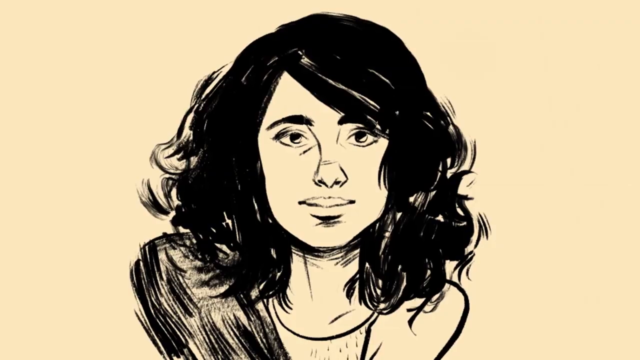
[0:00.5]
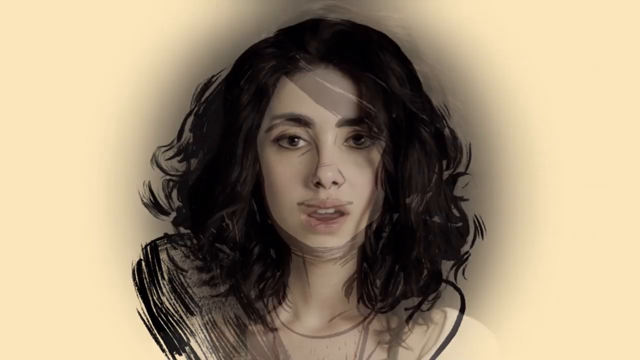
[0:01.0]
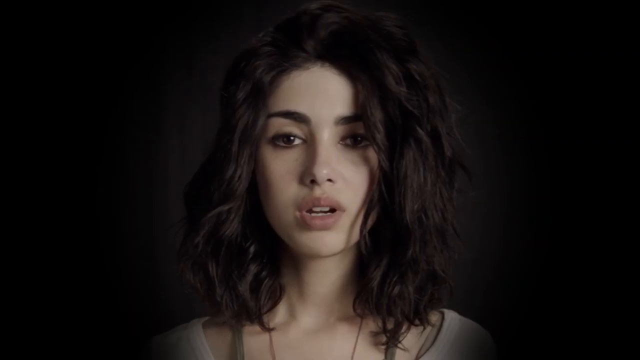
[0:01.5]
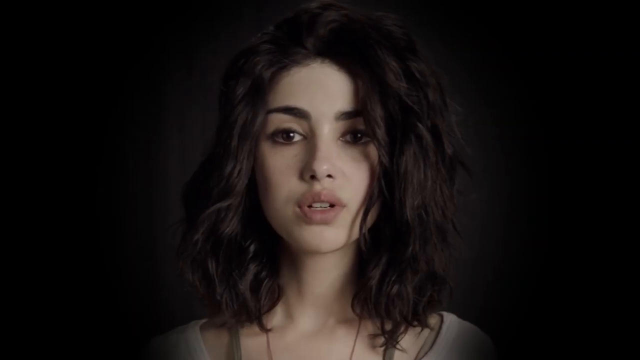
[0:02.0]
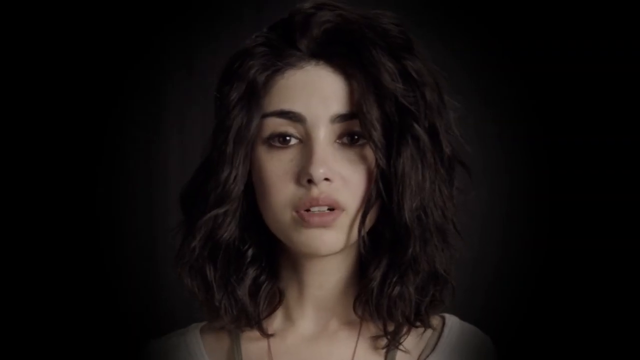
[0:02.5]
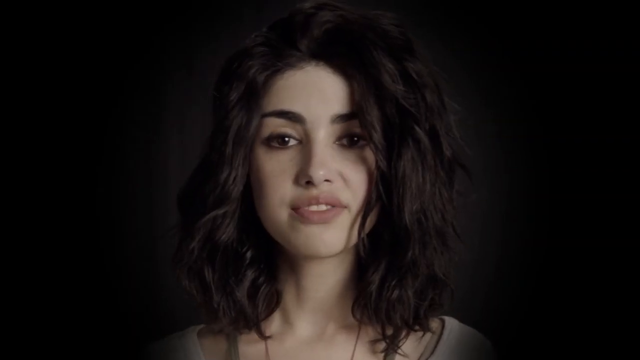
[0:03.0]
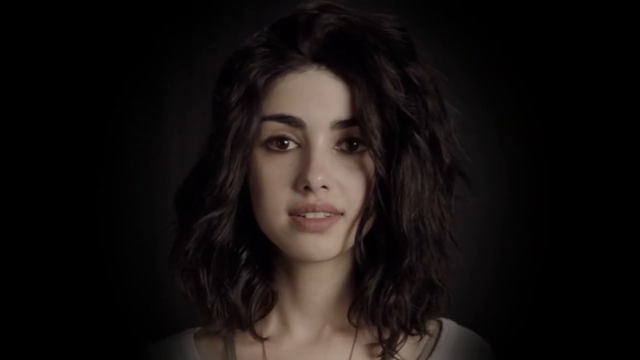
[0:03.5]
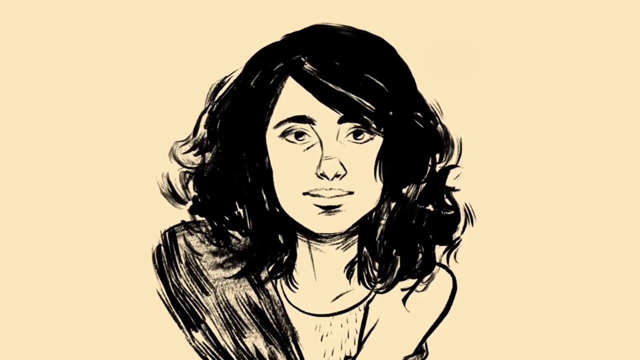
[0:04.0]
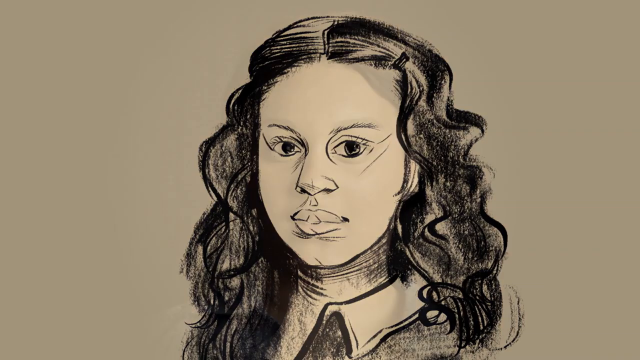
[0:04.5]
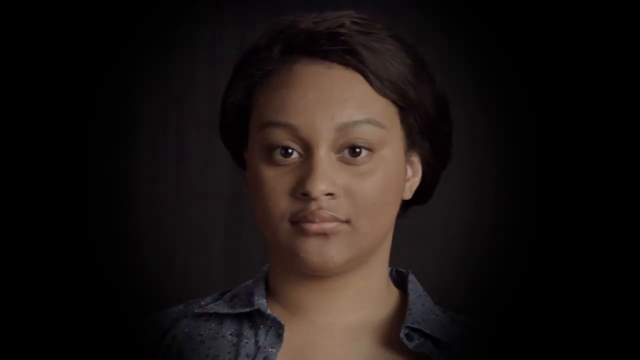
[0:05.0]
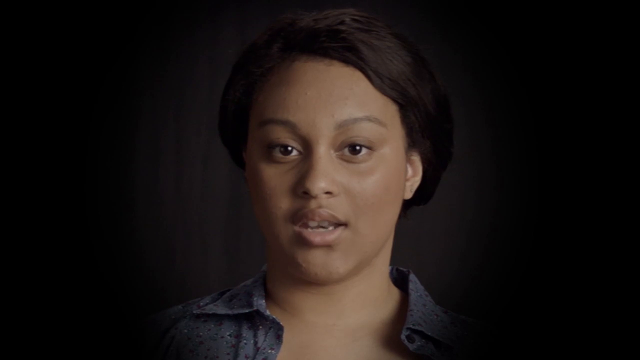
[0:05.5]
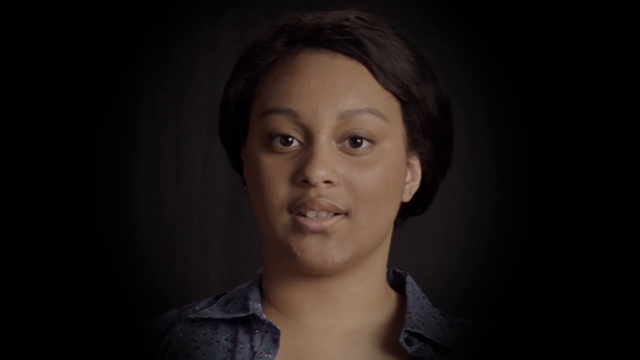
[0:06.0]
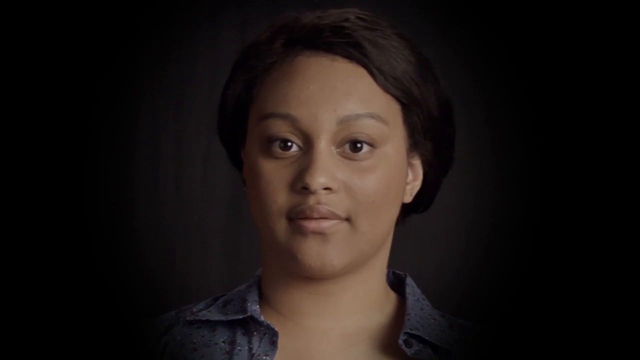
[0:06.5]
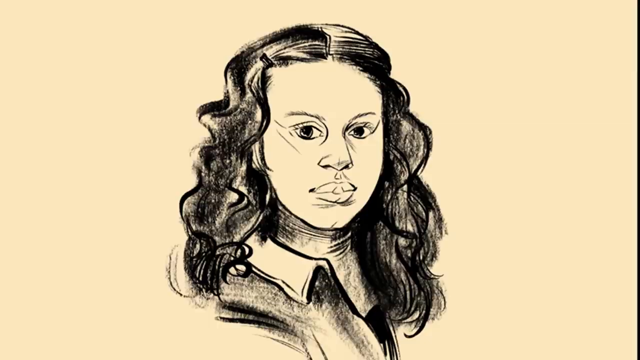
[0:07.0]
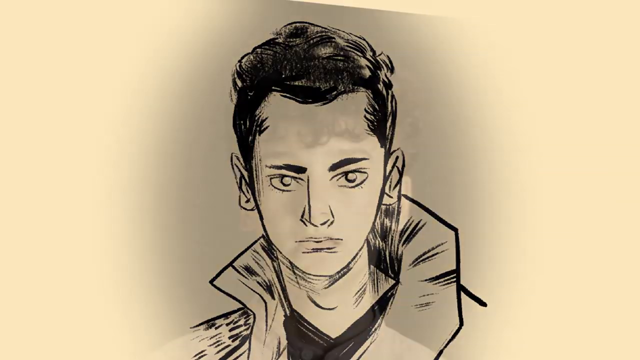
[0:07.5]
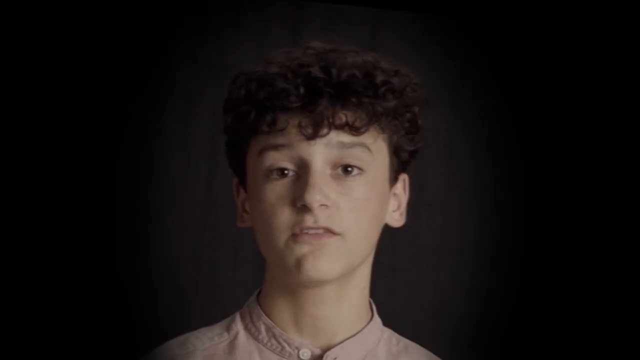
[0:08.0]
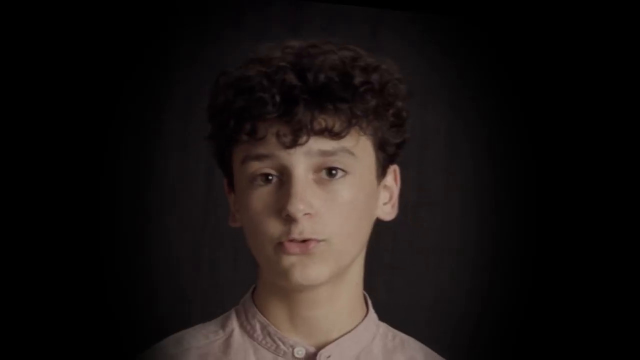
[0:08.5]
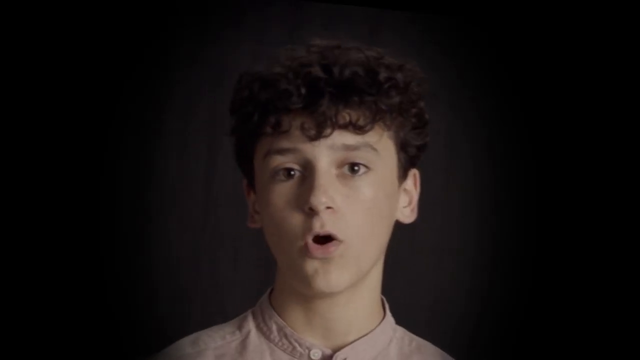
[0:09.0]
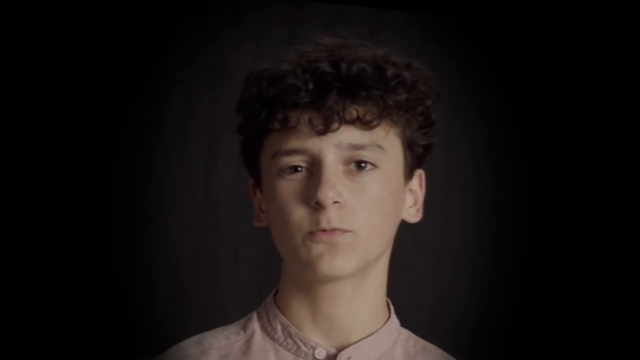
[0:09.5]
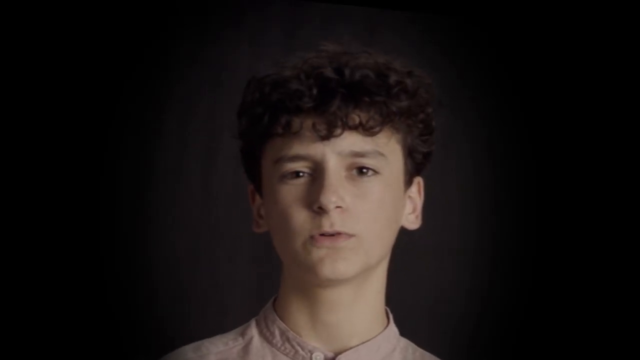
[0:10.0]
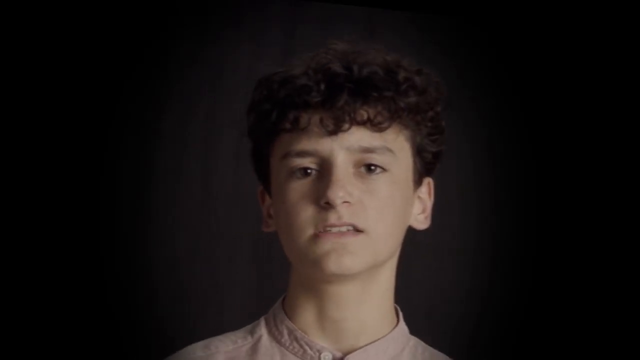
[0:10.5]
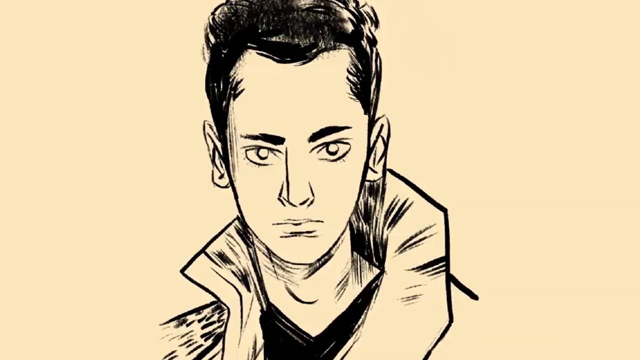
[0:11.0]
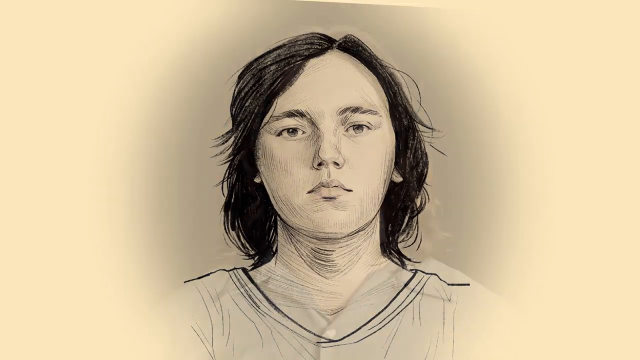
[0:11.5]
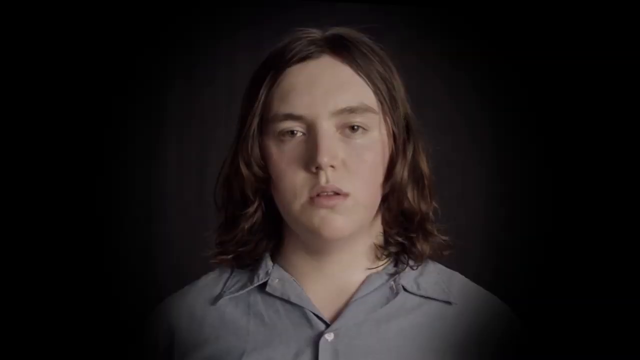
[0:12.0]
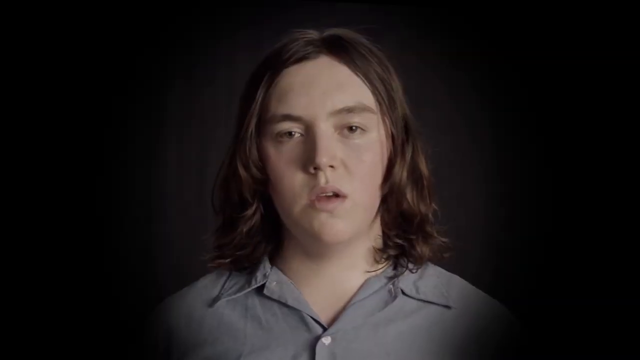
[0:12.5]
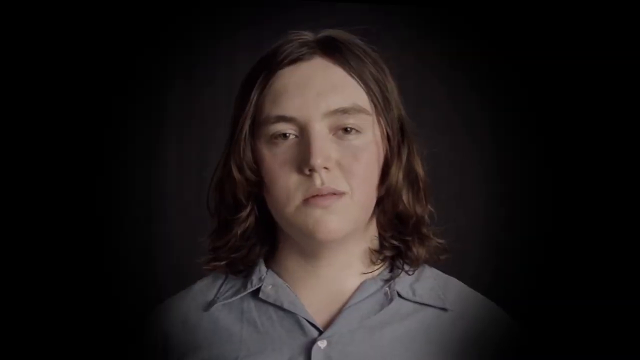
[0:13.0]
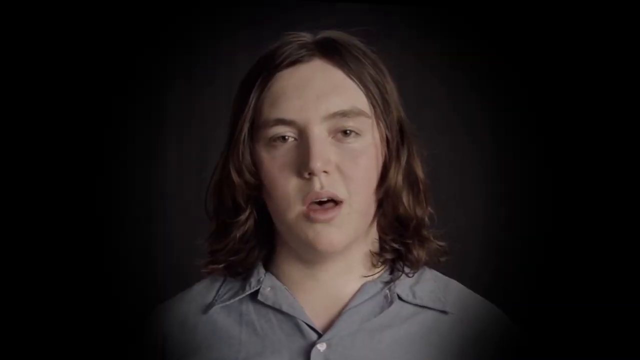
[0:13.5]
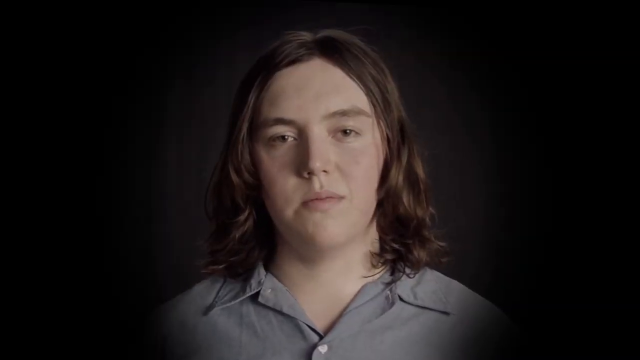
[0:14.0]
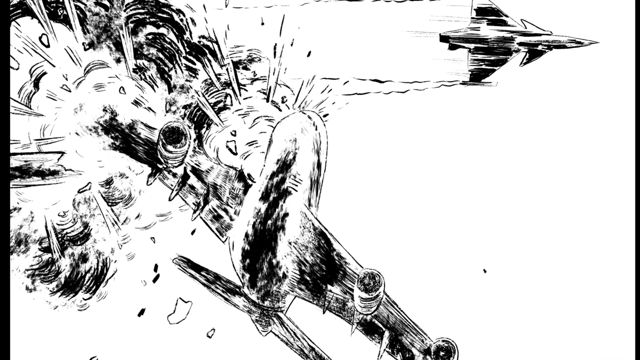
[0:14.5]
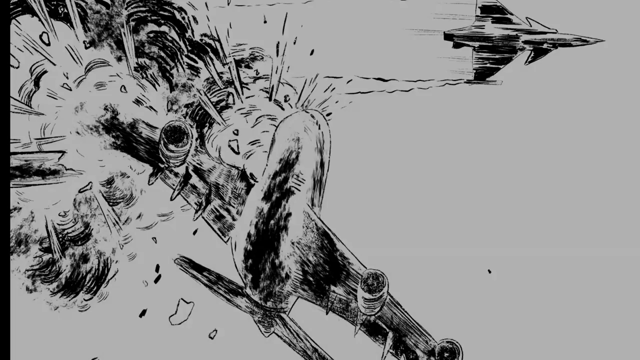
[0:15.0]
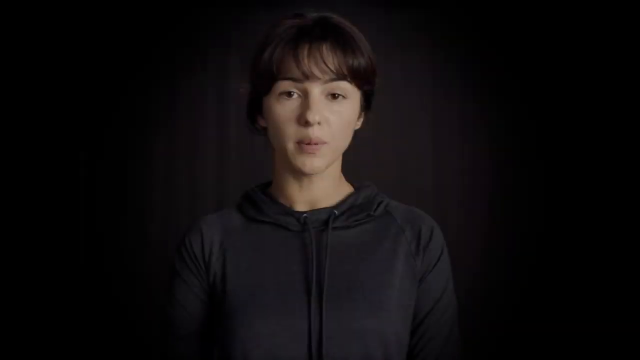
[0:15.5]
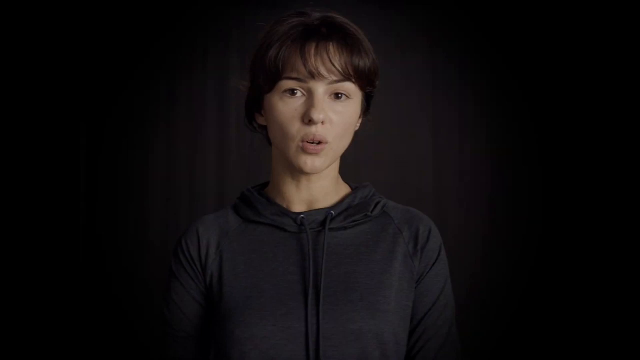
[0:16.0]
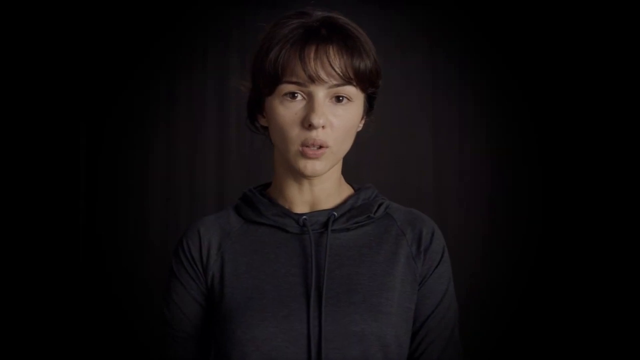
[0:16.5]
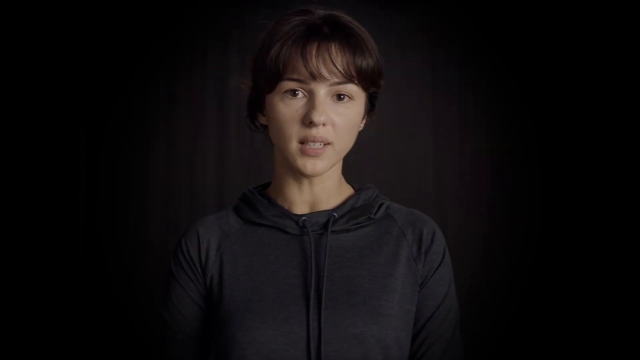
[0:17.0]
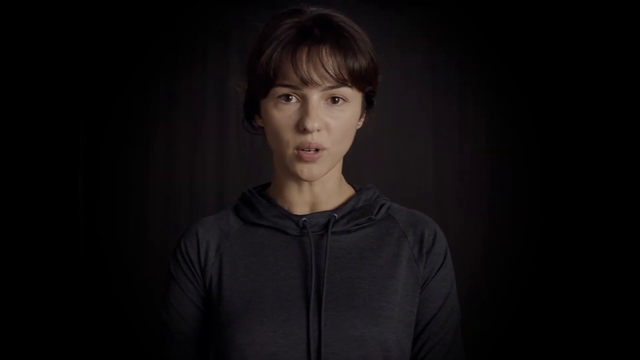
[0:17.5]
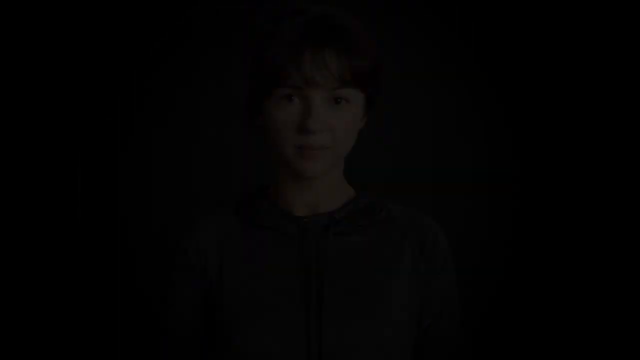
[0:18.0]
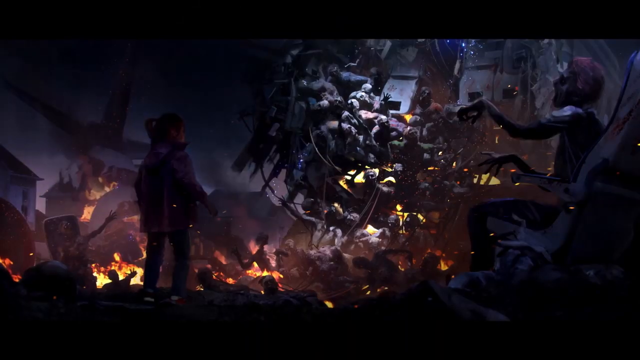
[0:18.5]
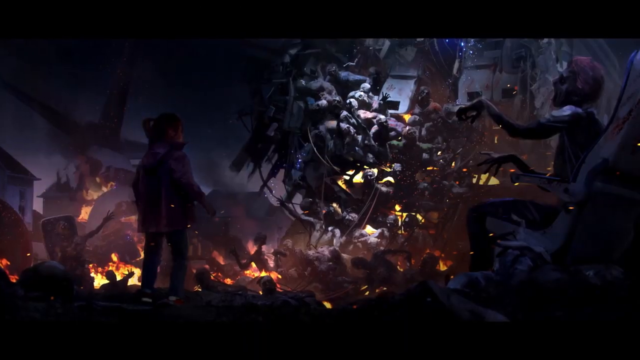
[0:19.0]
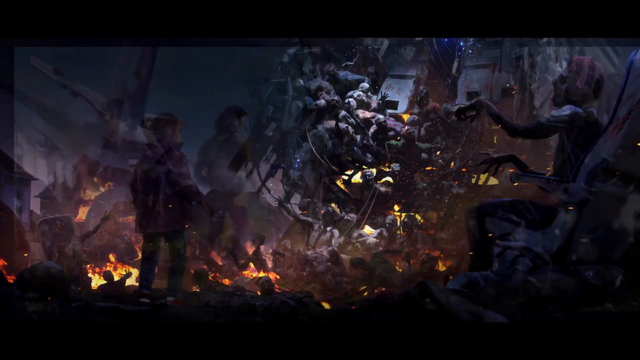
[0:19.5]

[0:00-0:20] Drawings of people flash by very quickly, then stop, and a real person matching the drawing appears on the screen. The first is a young lady with dark brown hair, who appears and says something. The drawings resume and stop on another young lady, who also says something. They then stop on a young man with curly hair, and then on another lady. A sketch of two aircraft that seem to be flying appears. After that another lady appears and says something before the video quickly moves on. A very chaotic scene follows, in which what seems like a lady stands staring at a giant piece of equipment; the place is very messy and seems to have been invaded.